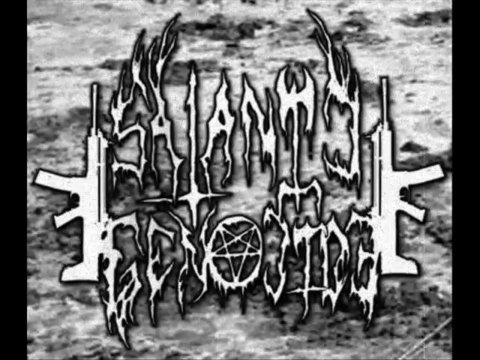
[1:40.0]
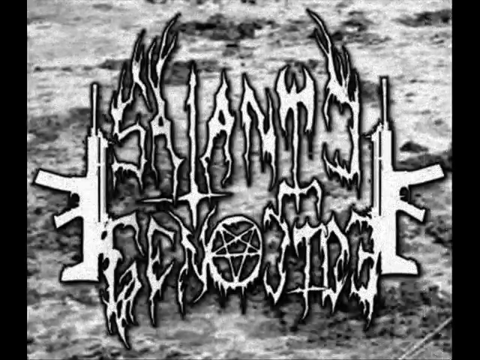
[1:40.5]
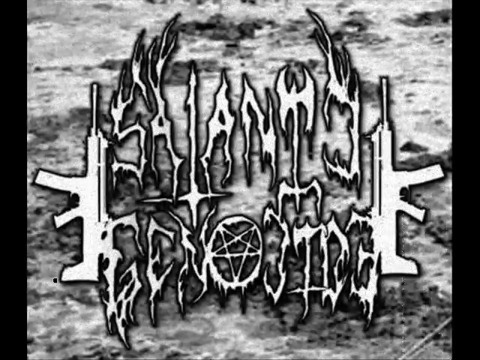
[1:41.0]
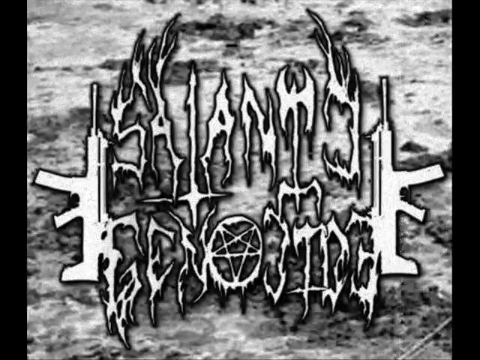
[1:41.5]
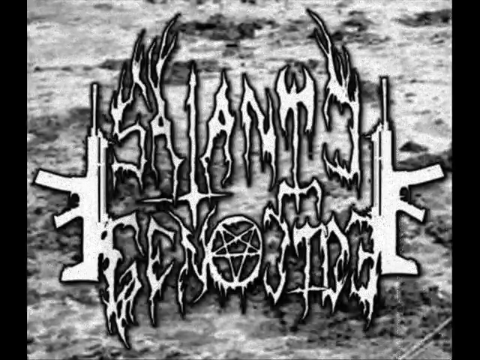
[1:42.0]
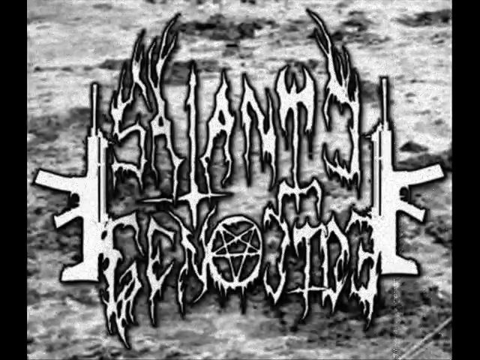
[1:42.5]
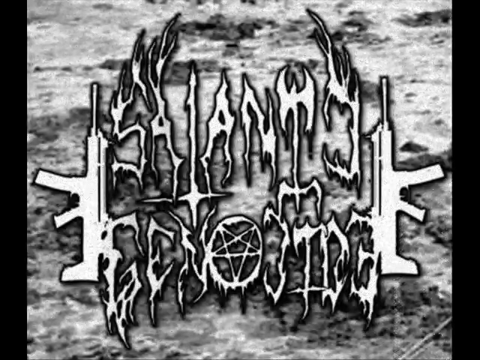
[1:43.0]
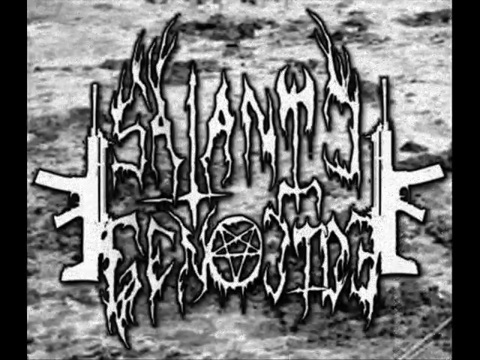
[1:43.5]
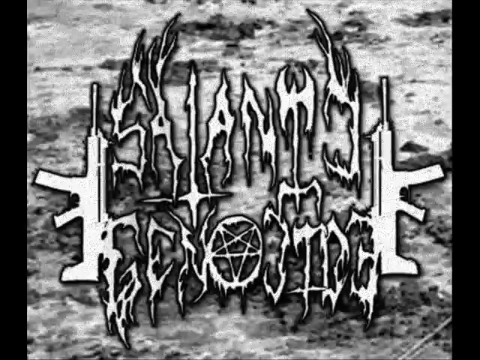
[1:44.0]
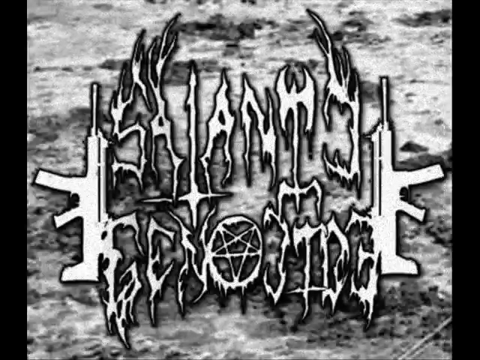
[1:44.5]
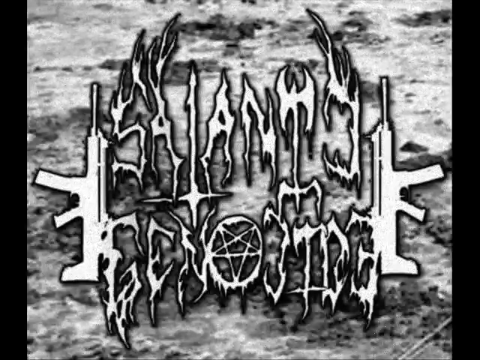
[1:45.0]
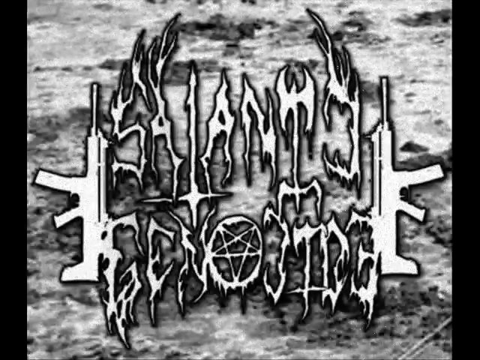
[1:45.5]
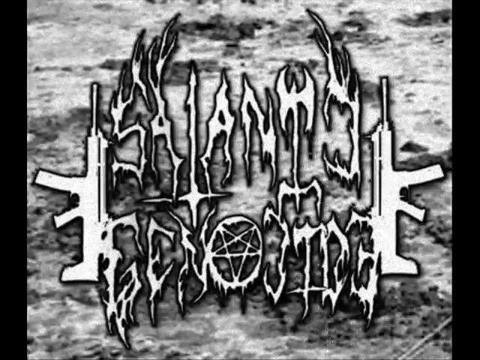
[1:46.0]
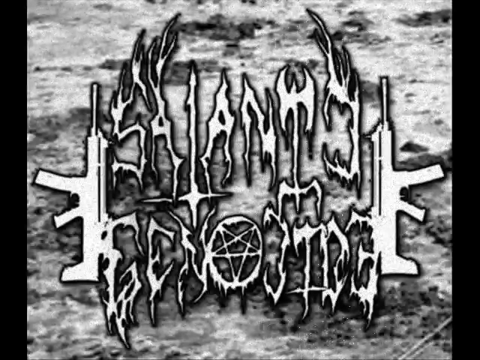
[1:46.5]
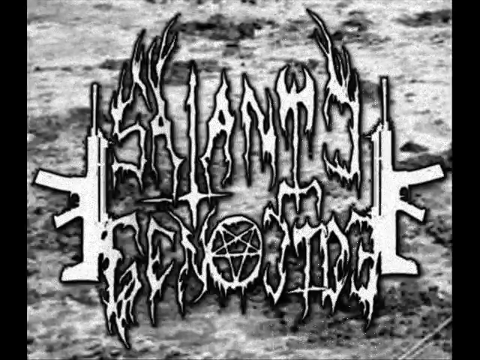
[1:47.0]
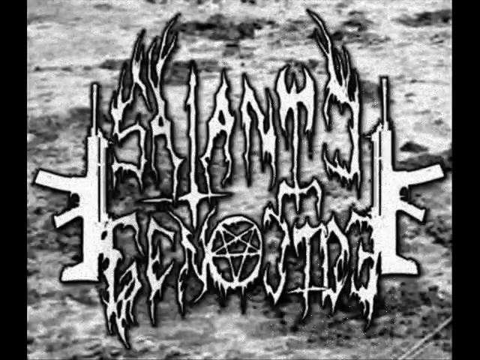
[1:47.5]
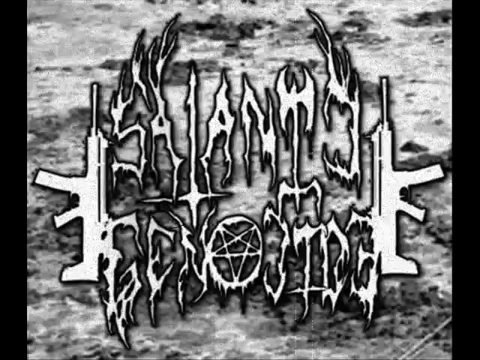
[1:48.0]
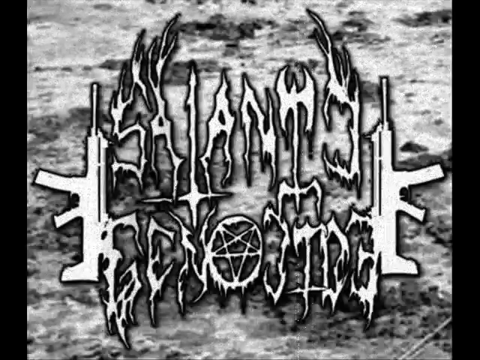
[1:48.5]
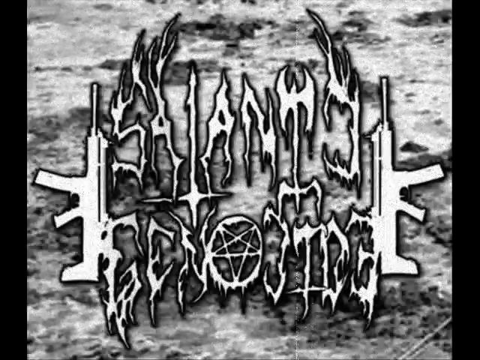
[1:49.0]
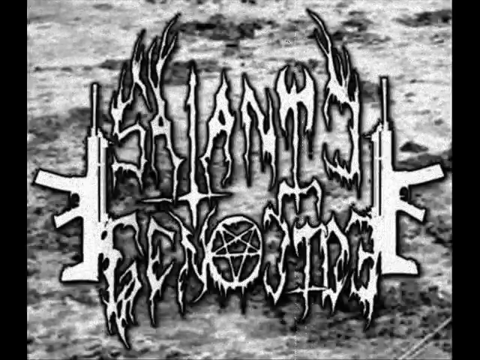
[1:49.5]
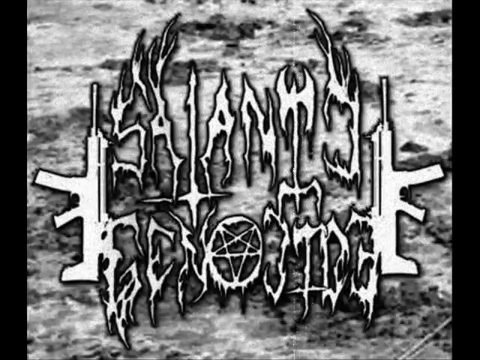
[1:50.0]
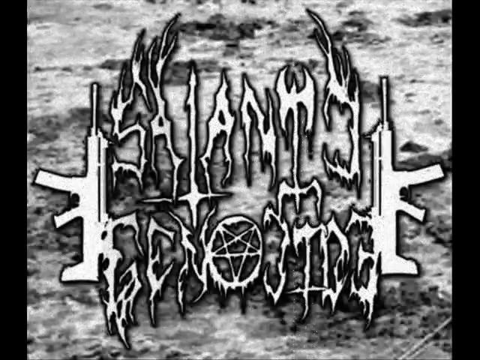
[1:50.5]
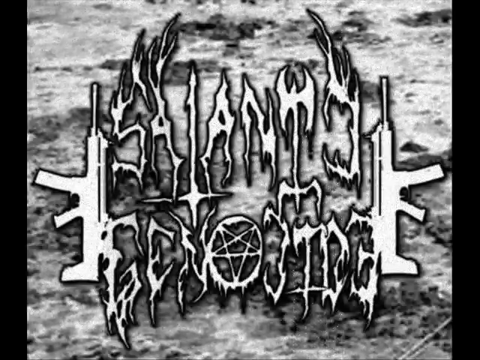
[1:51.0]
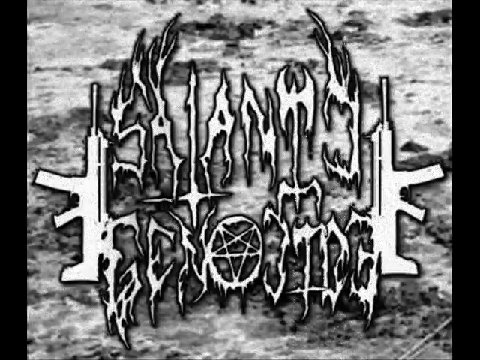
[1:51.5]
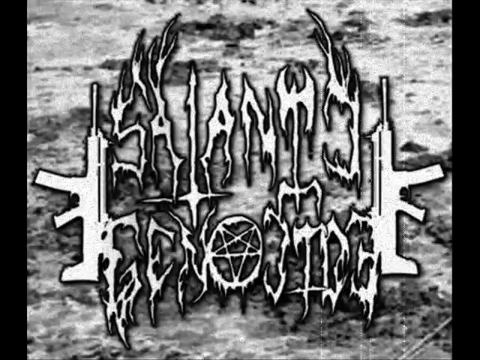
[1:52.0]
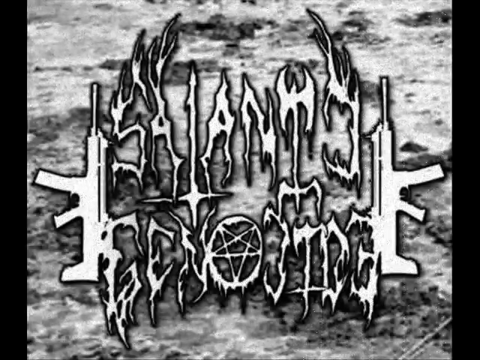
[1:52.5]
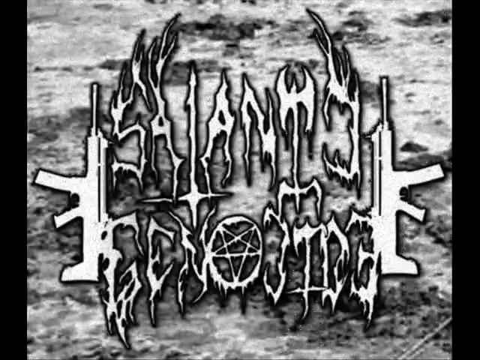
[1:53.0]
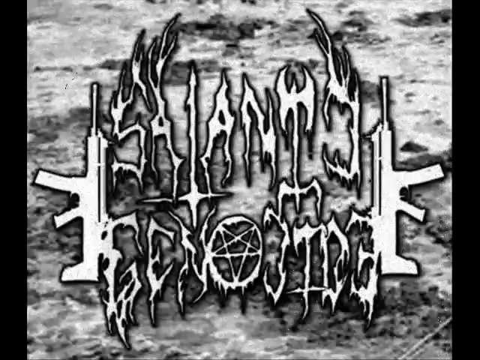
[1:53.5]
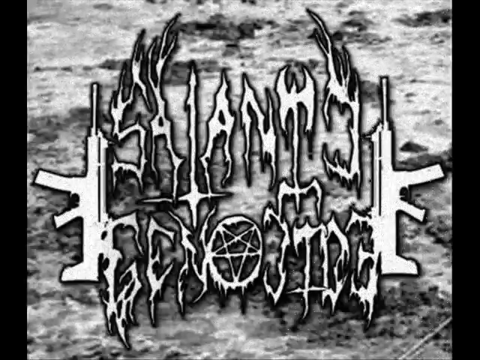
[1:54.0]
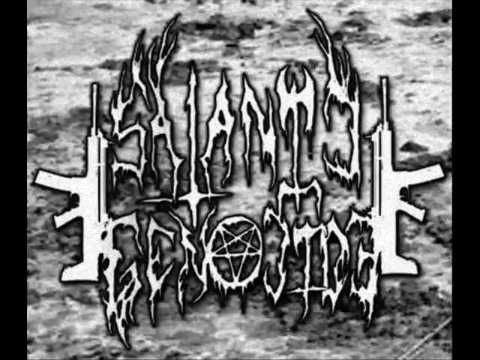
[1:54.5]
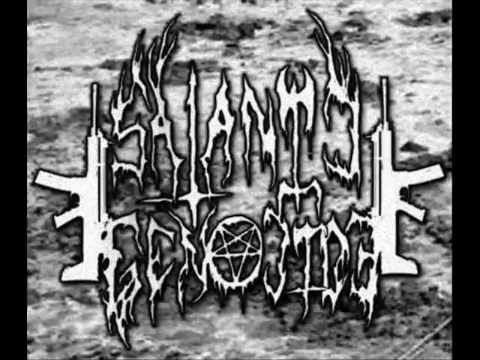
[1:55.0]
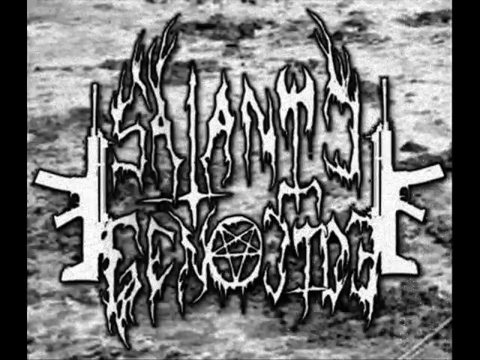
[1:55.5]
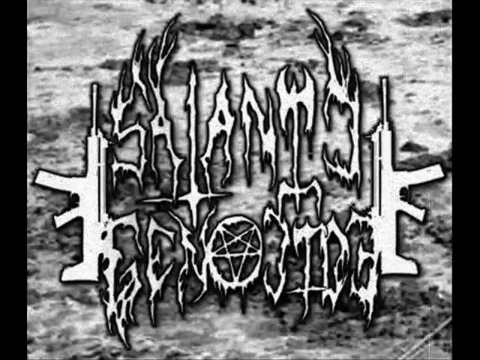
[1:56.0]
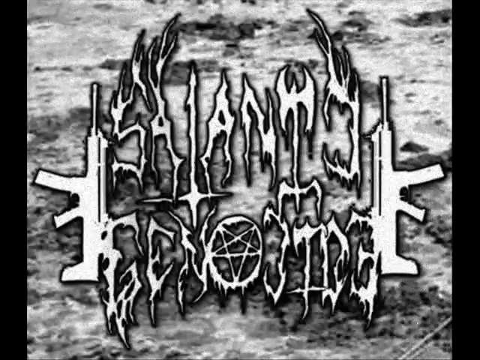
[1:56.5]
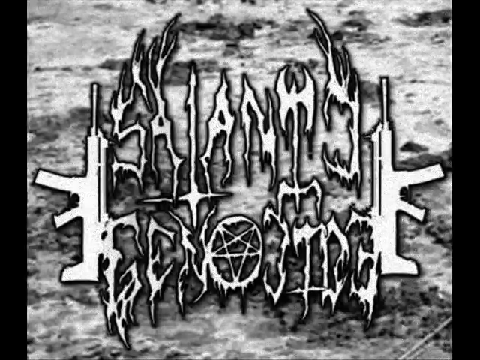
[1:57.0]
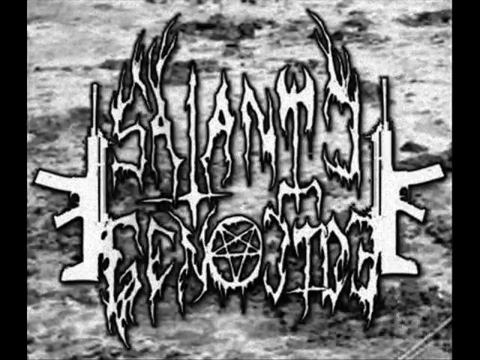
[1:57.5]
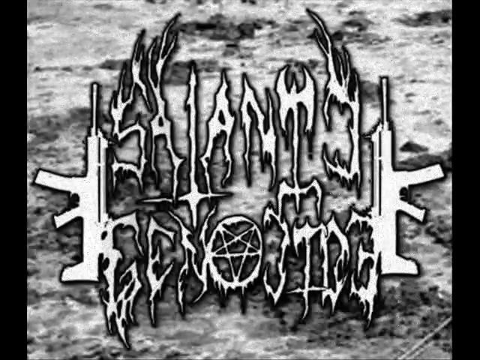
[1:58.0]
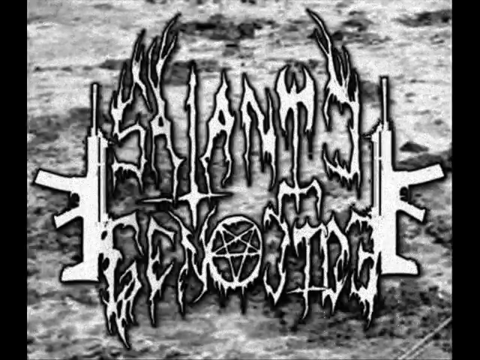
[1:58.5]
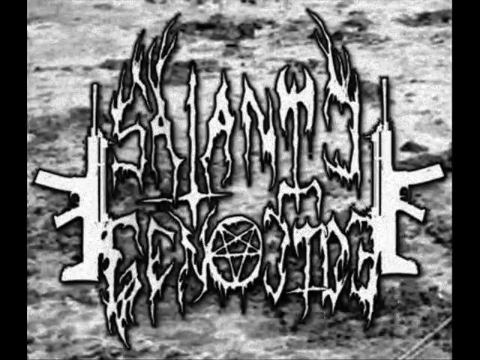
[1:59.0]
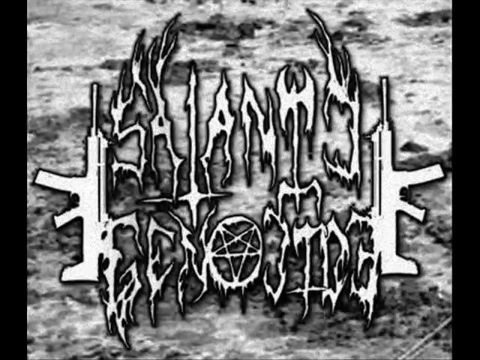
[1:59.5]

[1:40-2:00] The image is largely unchanged, but some slight static appears and the image looks a little darker.